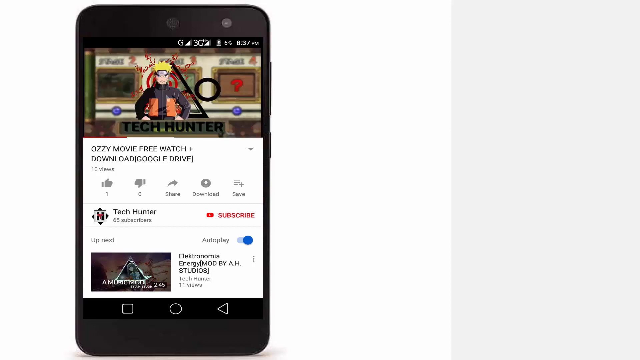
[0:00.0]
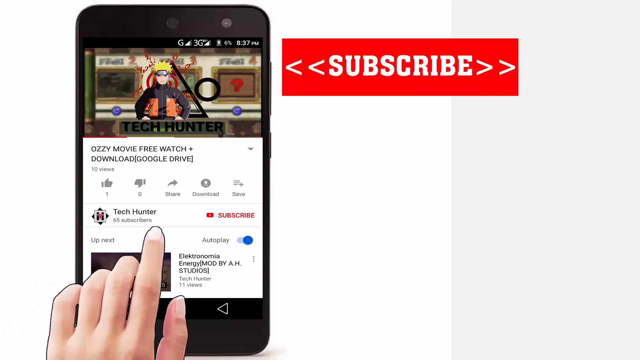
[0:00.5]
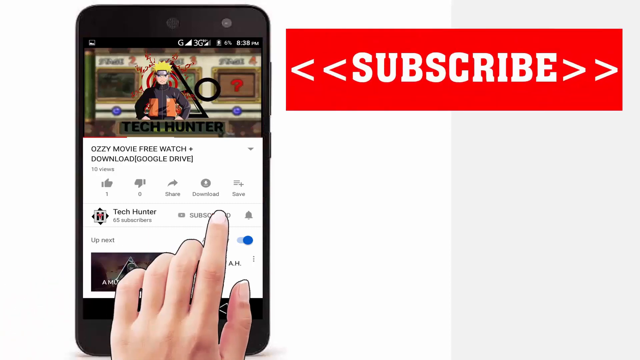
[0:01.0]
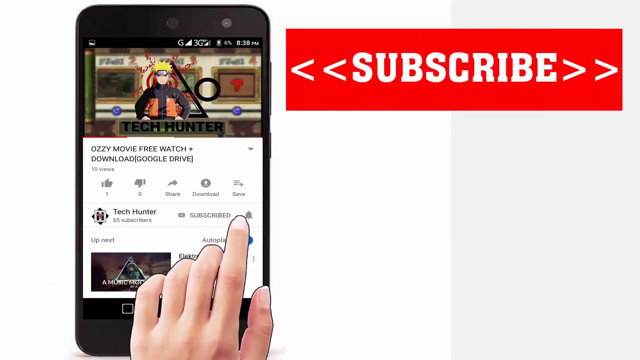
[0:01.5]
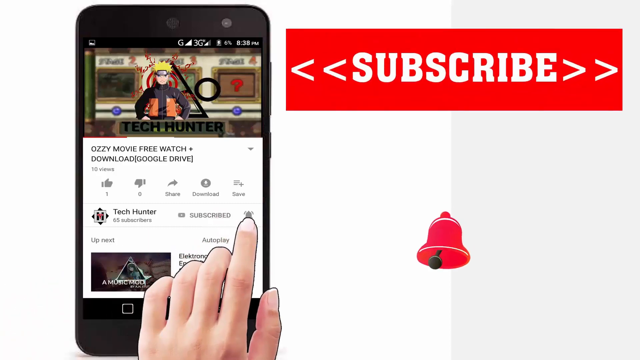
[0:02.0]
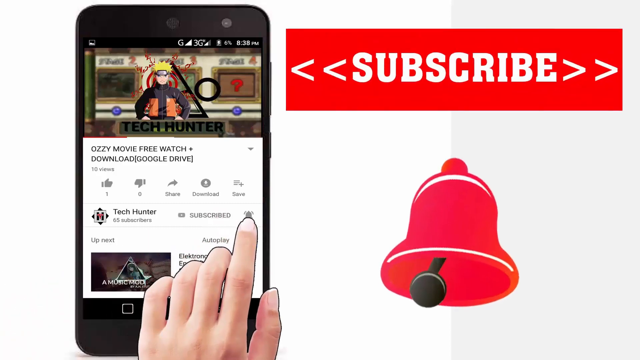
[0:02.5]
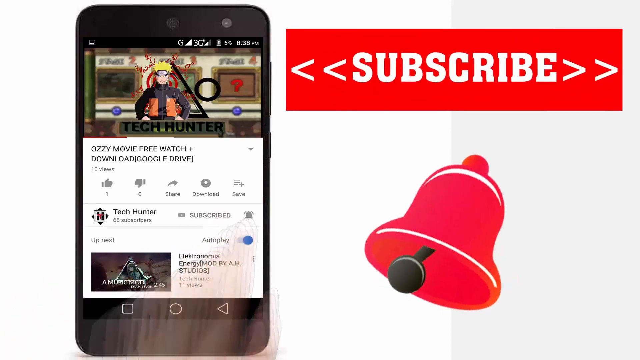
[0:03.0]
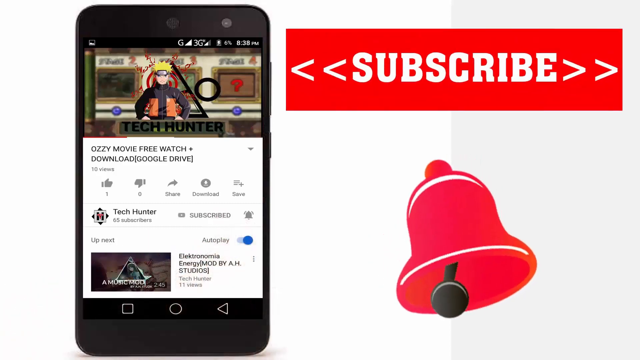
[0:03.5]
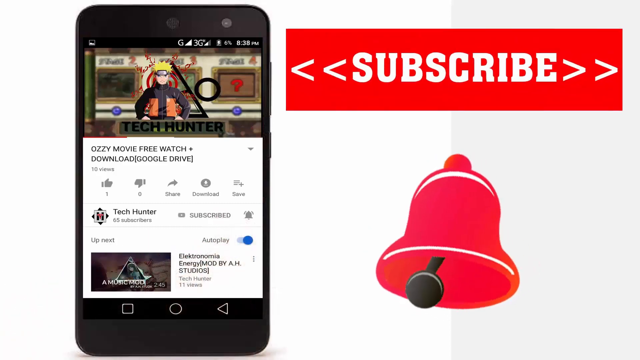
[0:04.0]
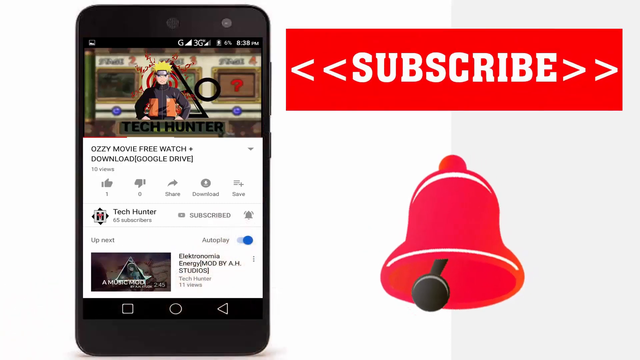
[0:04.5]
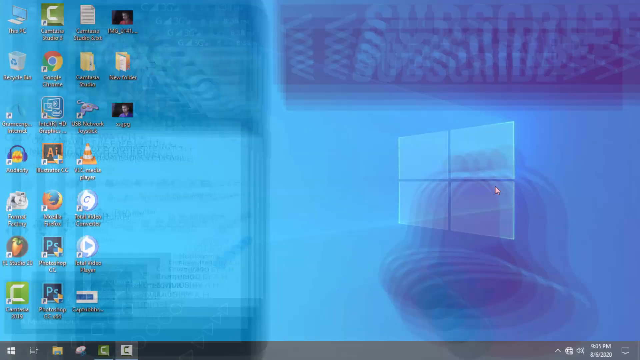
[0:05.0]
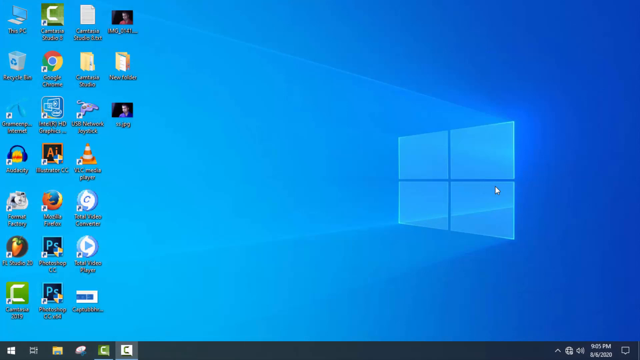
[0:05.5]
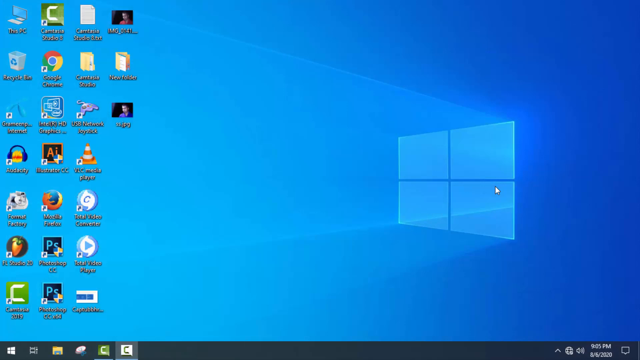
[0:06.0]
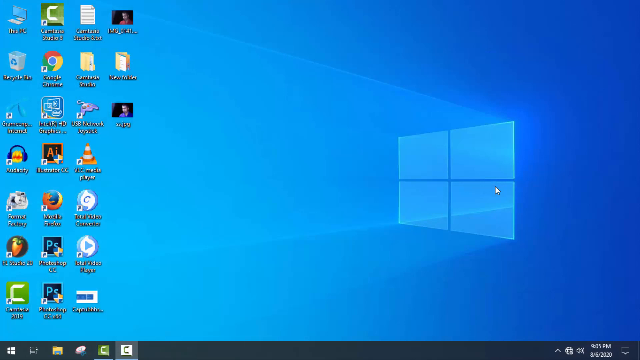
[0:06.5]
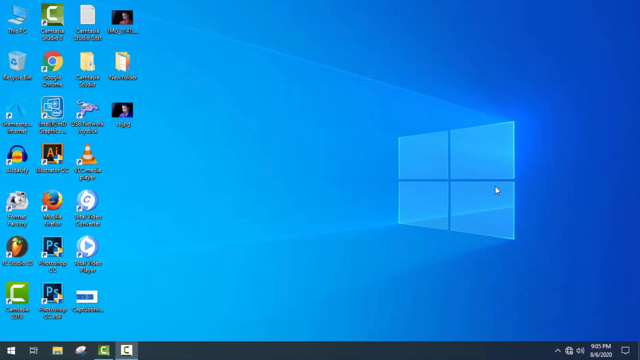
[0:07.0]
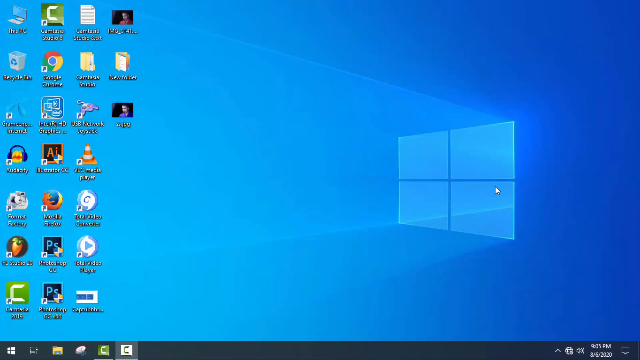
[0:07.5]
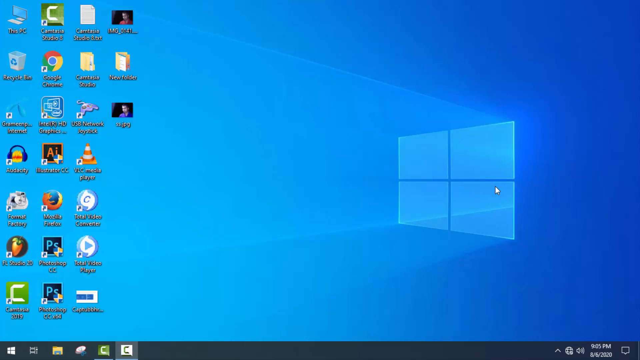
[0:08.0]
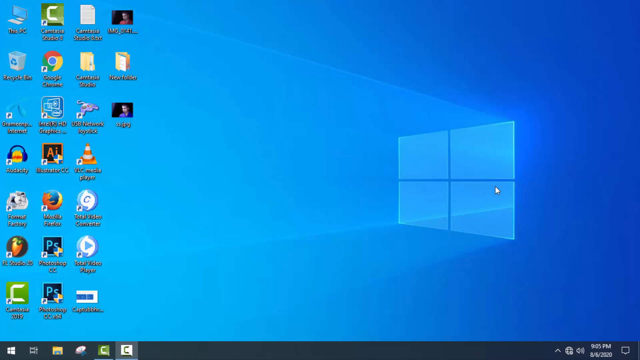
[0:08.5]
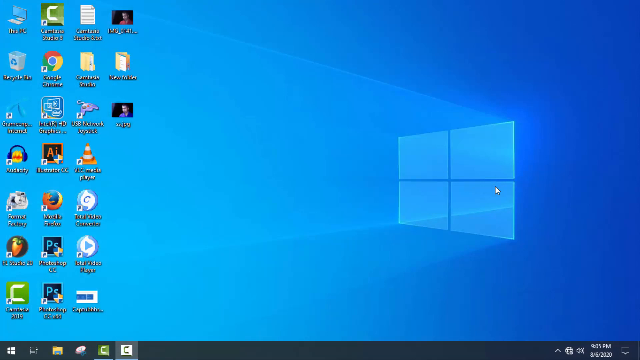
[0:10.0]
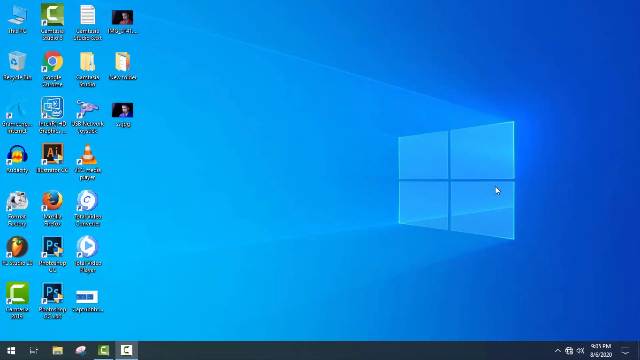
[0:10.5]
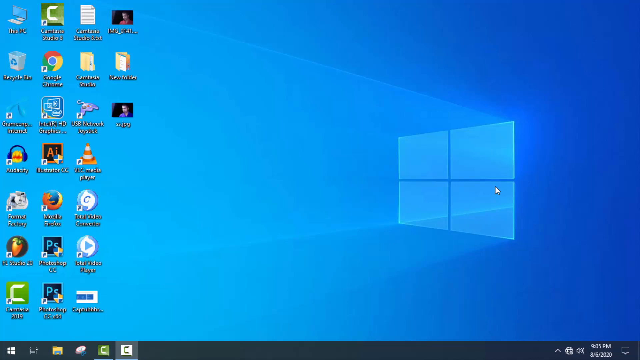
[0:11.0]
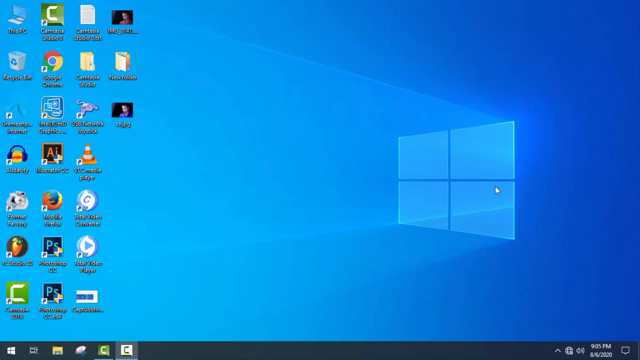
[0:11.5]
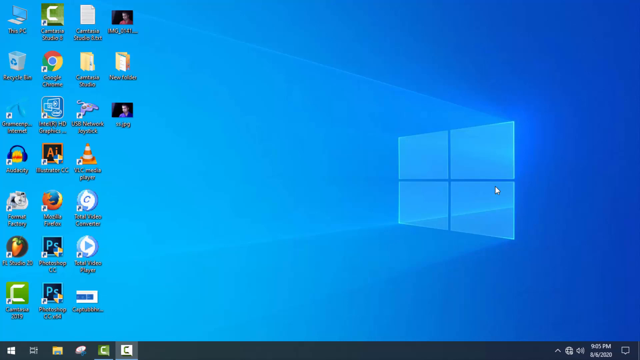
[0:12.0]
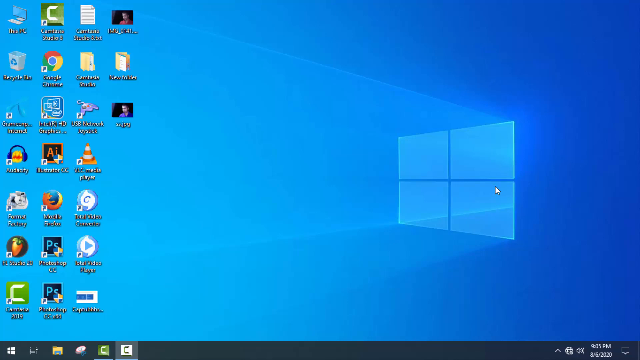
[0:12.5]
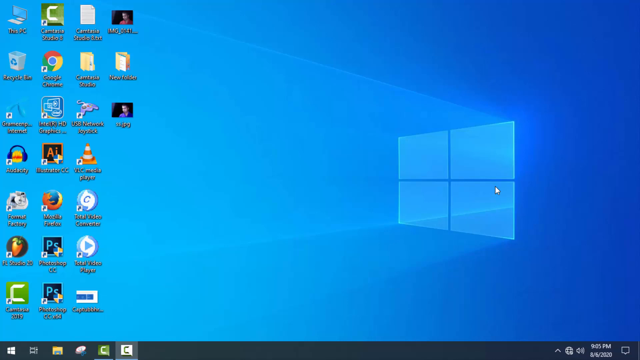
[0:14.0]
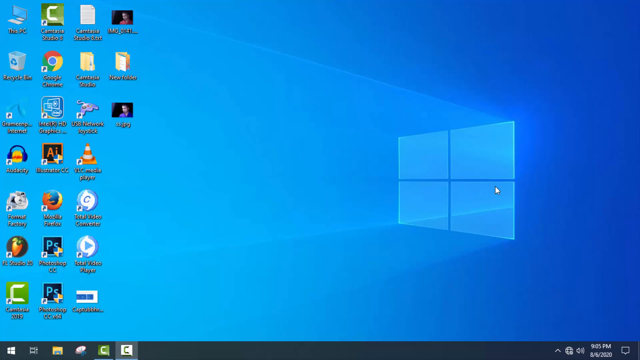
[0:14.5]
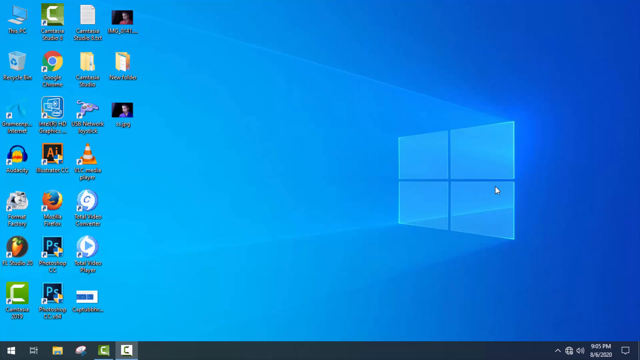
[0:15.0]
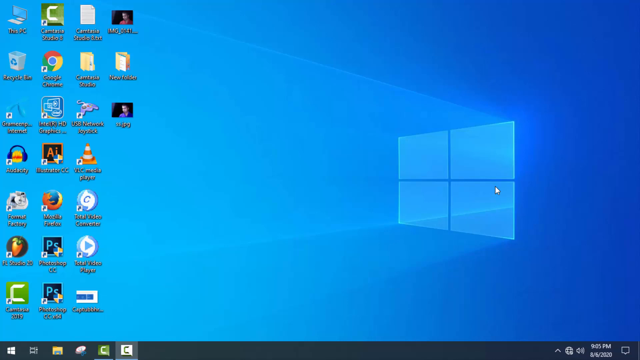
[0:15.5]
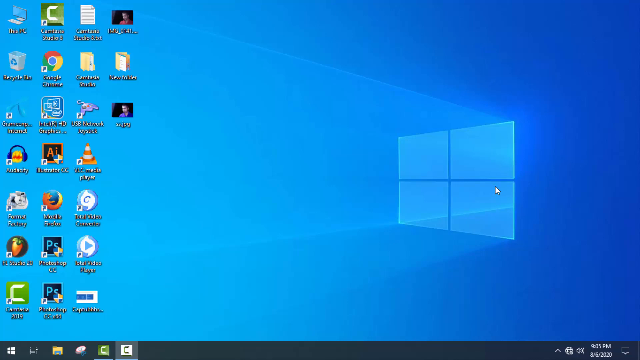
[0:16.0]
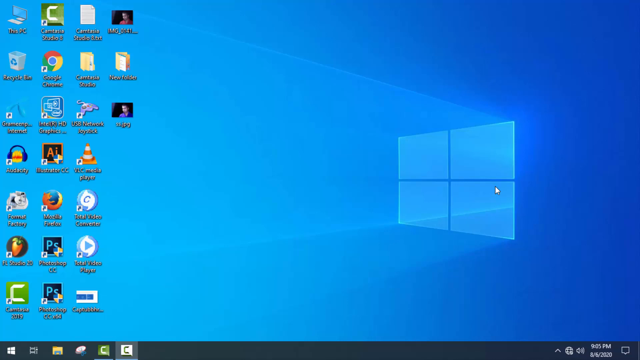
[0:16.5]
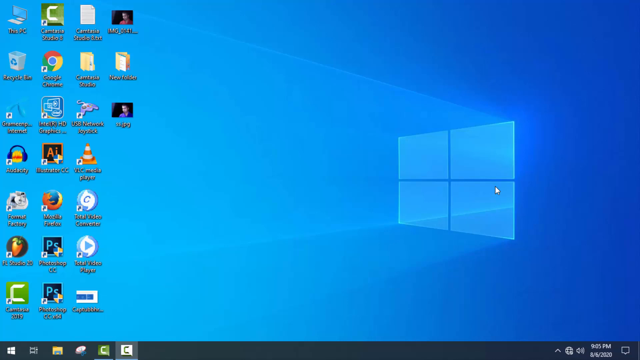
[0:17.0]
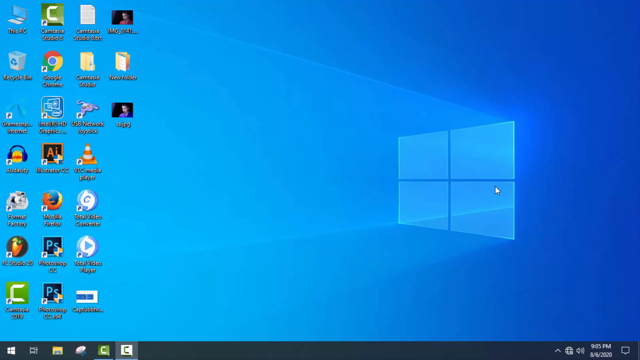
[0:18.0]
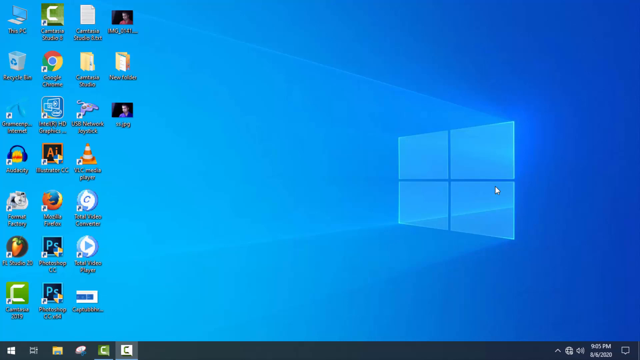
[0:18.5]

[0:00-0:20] The video appears to open with an intro for a YouTube channel, showing the channel name and a small image of Naruto from the anime show surrounded by graphic design symbols; it seems to be a tutorial channel. It then cuts to the desktop display of a Windows computer, and little else happens on screen.